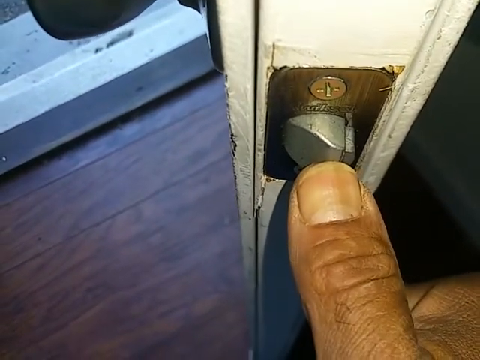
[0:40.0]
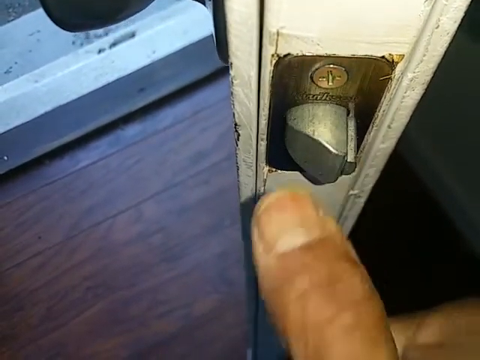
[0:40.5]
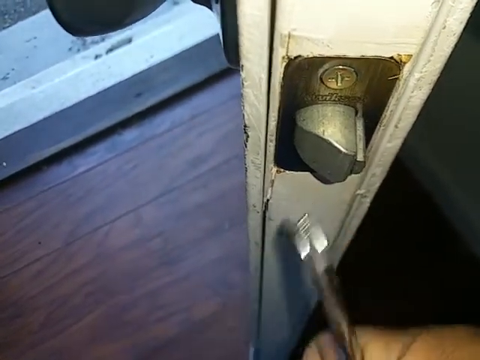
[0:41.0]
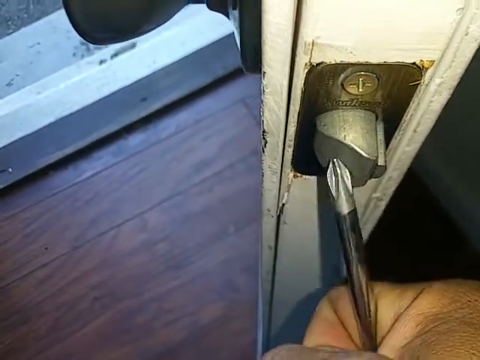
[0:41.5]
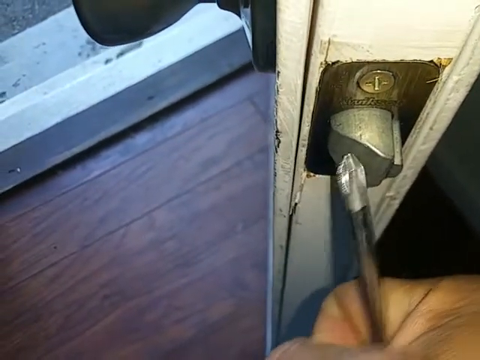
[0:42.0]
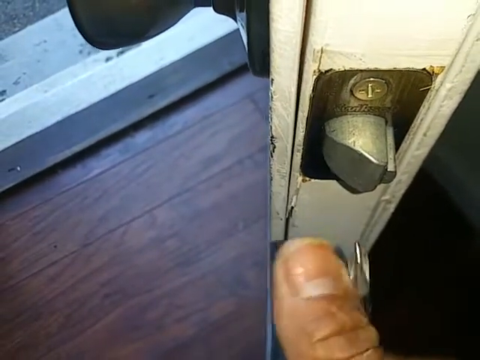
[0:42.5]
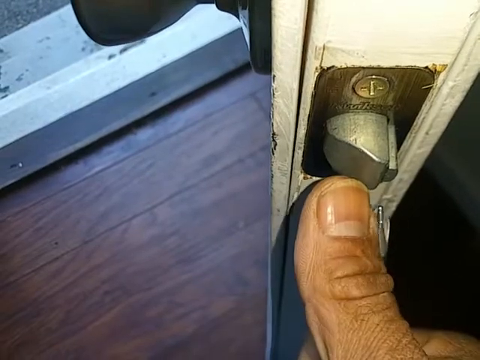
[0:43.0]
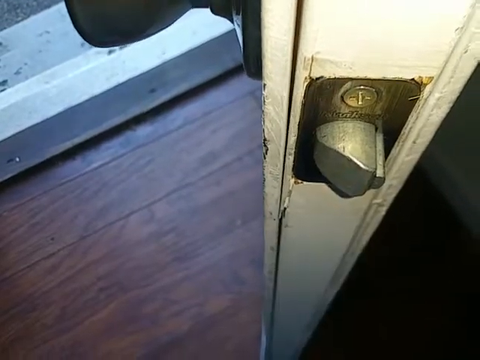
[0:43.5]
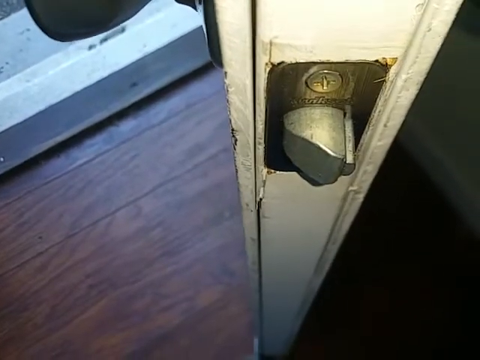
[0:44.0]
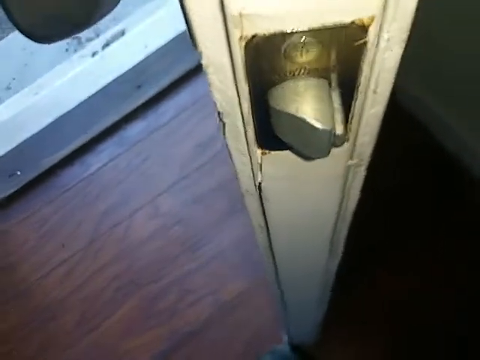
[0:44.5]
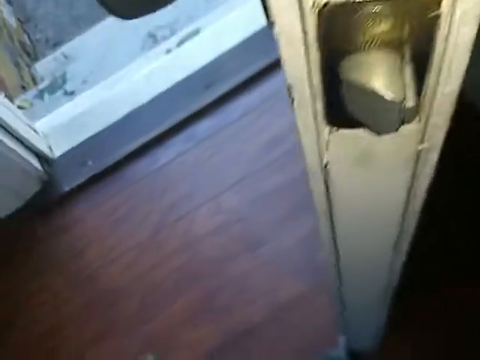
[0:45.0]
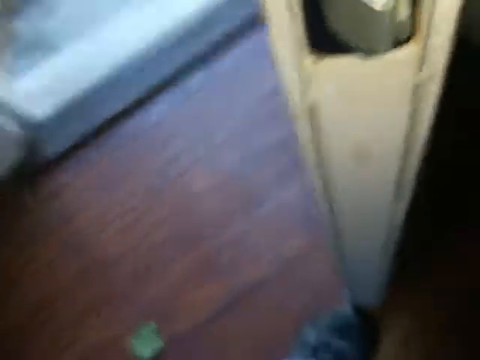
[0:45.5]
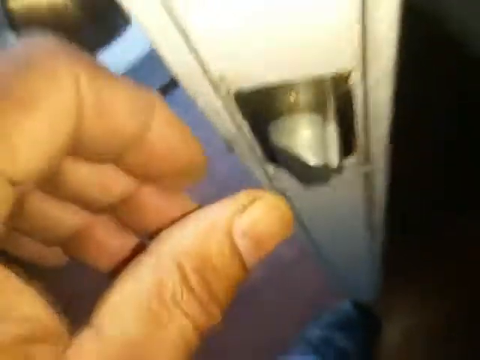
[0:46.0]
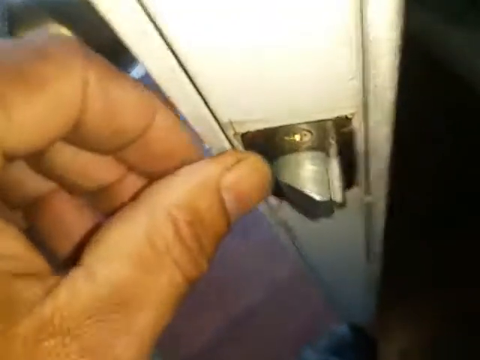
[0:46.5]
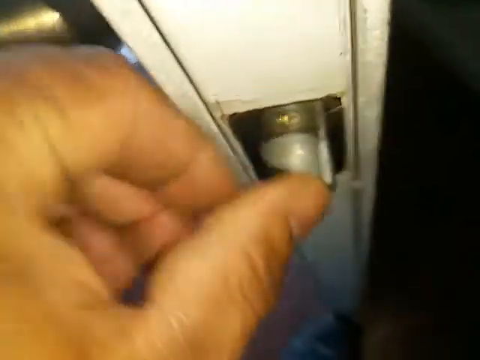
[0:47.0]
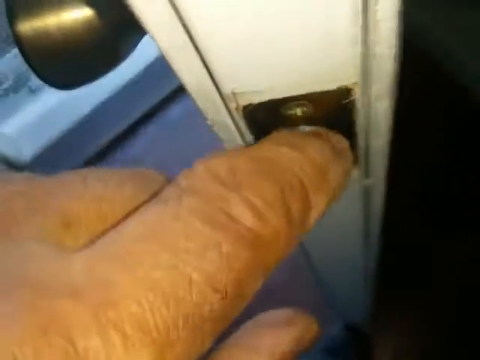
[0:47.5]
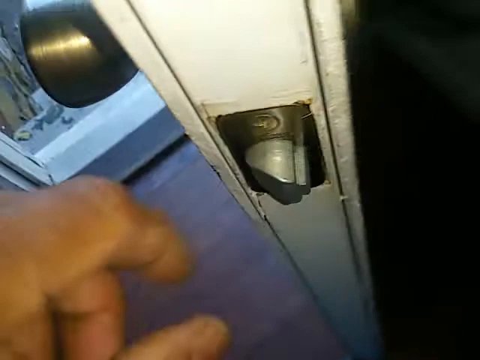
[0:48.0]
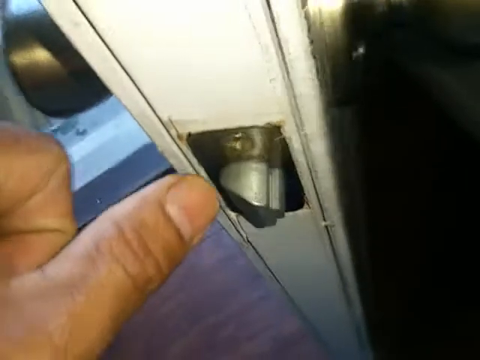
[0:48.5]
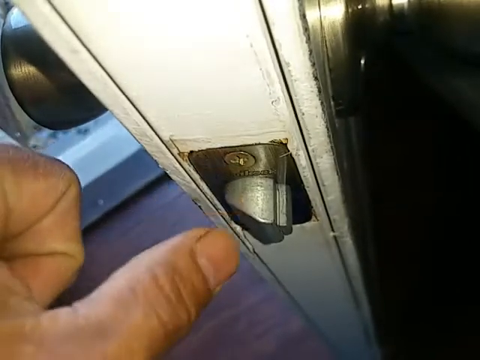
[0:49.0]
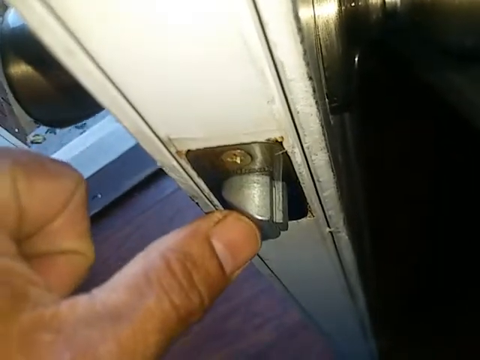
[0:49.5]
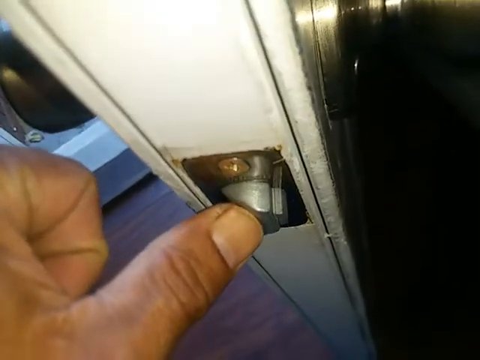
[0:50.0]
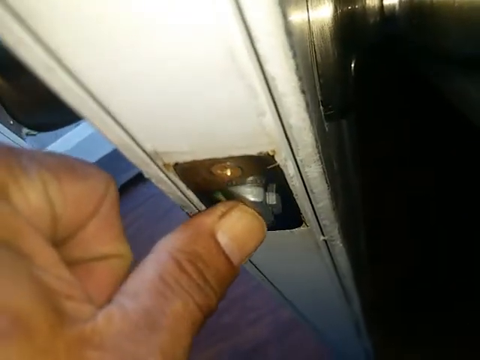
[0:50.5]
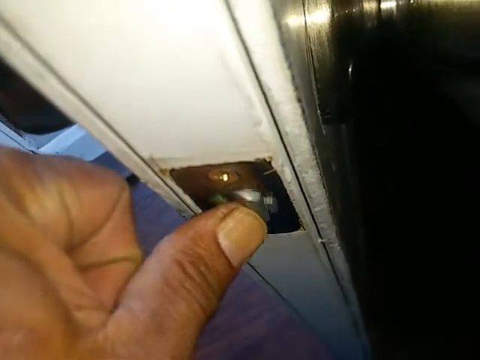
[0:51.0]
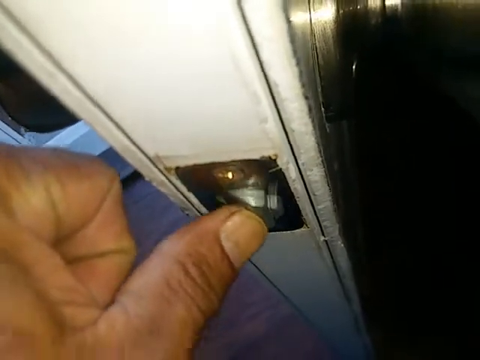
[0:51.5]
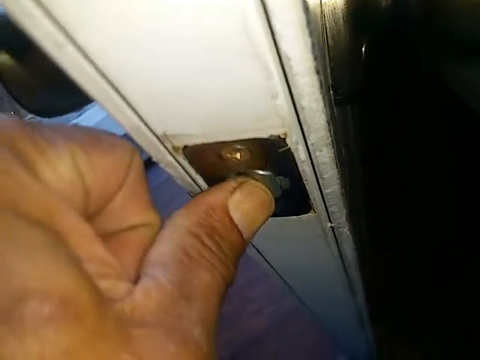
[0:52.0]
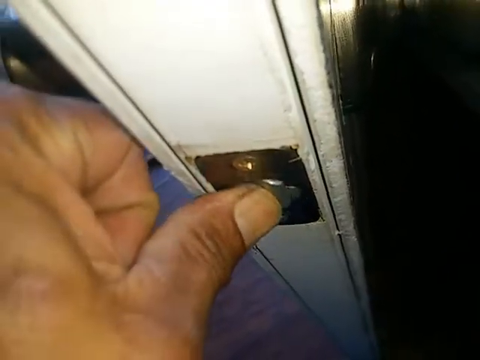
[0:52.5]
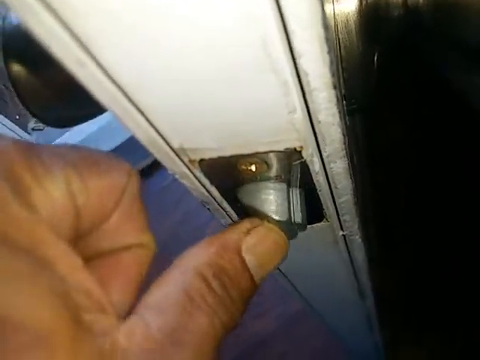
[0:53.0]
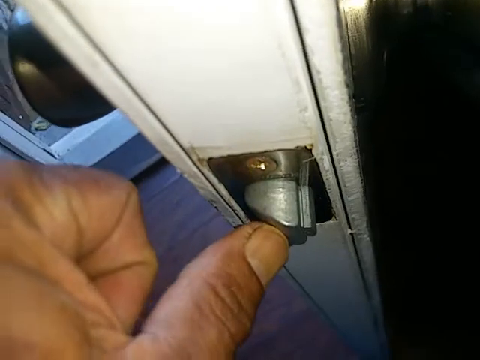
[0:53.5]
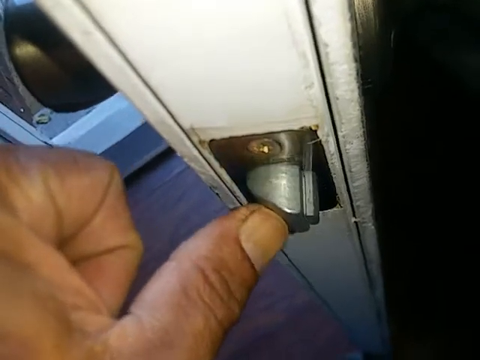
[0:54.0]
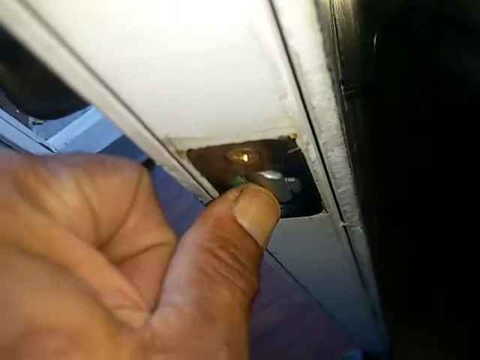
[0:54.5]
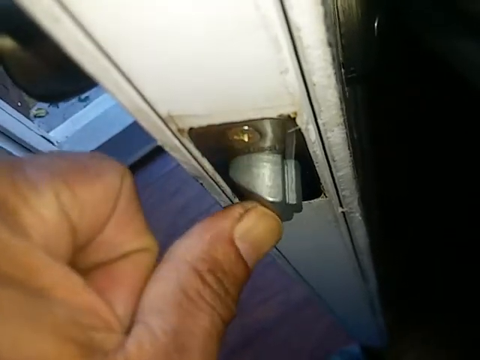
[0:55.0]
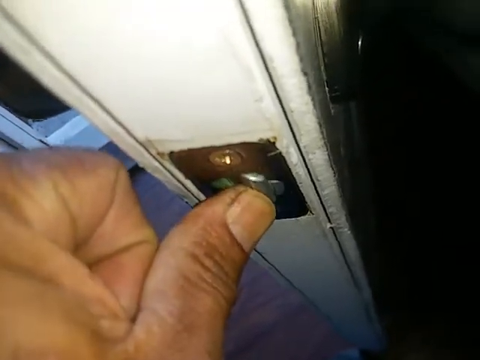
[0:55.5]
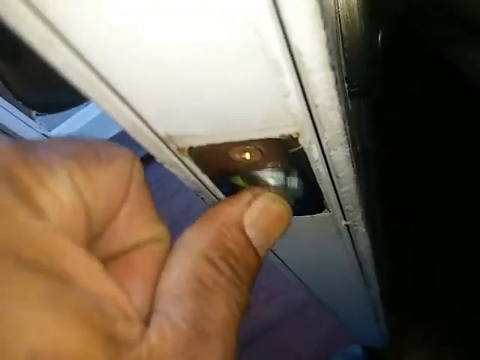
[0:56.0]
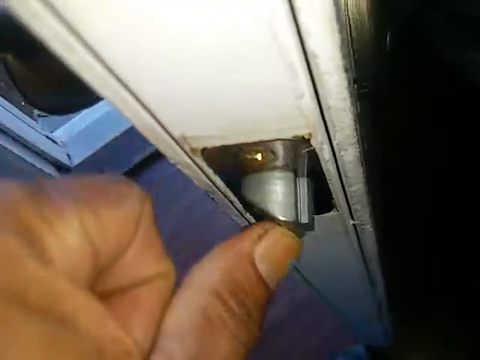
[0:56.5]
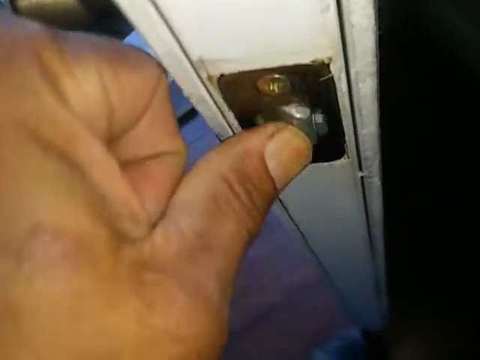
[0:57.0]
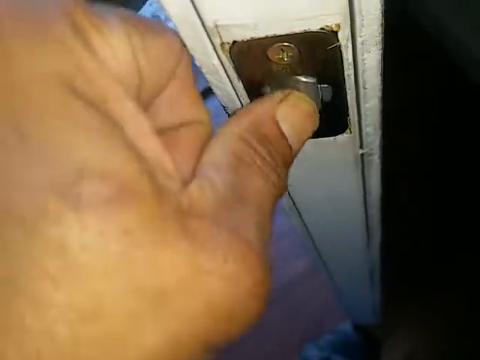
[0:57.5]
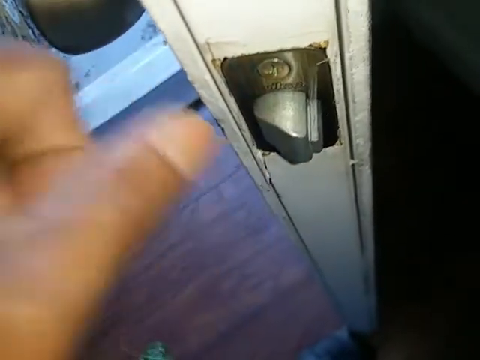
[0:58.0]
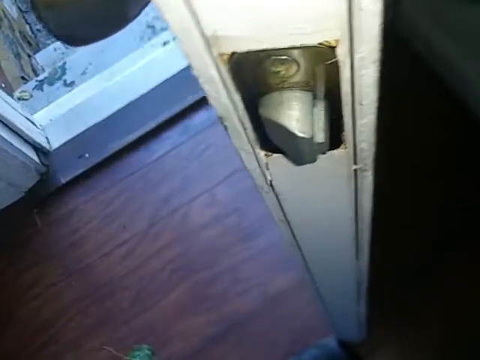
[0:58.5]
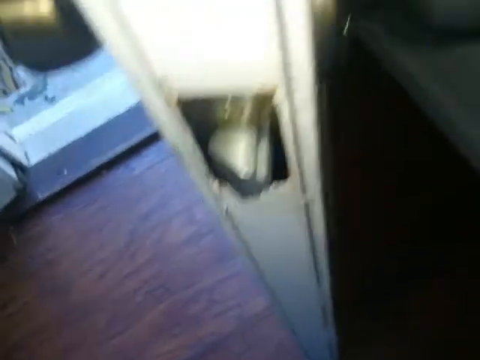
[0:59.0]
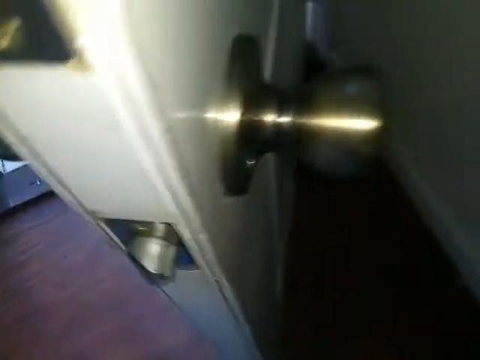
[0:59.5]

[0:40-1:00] The right thumb, with some dry skin and a darker skin tone, is shown against the door latch. The screwdriver, with a Phillips head attachment, taps on the latch to point toward it. The thumb again pushes against the latch before the camera moves to the right hand, zooming in and out wildly as the autofocus glitches. The left hand then appears with the thumb positioned on the latch, clicking it and pushing it into the door repeatedly, about eight times, as the latch keeps popping in and out. The camera moves back to the left hand before the right hand twists the interior knob, locking the door. The video is slightly blurry, apparently from an older camera, and the lighting is a little dark, with natural light now coming in from outside the door.